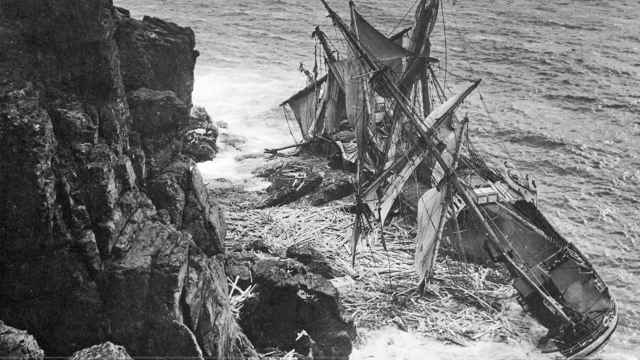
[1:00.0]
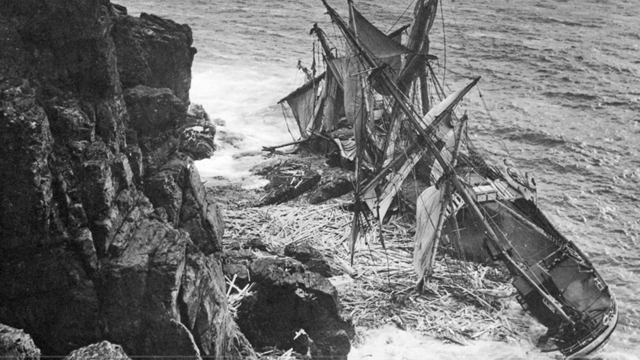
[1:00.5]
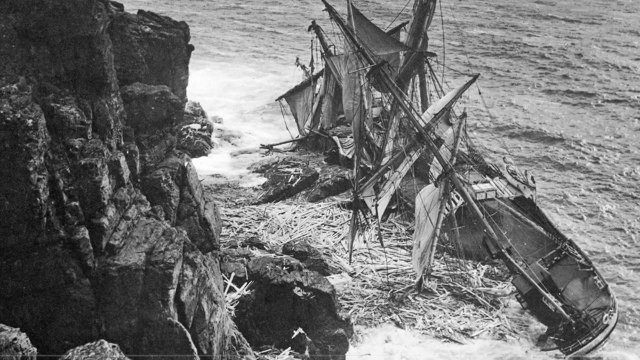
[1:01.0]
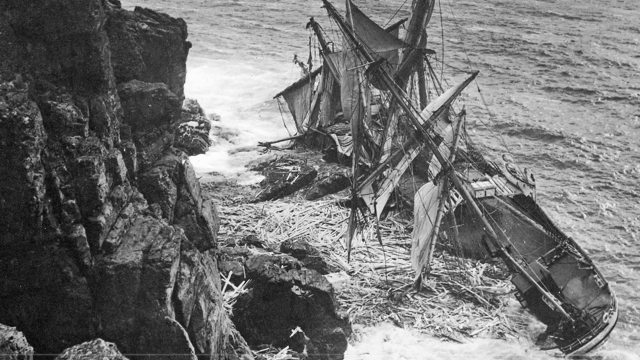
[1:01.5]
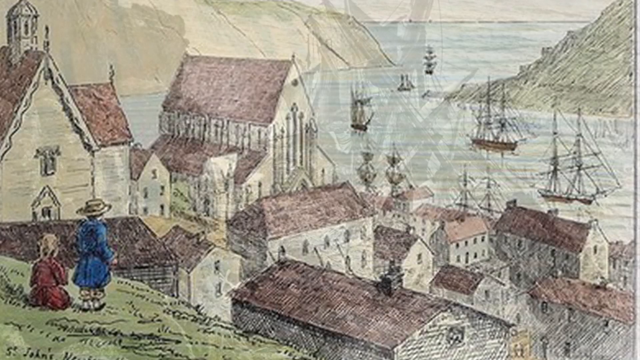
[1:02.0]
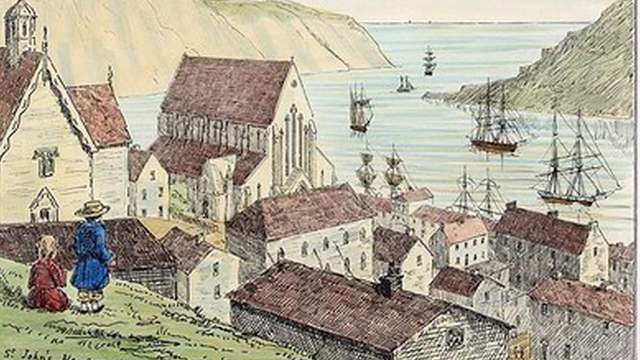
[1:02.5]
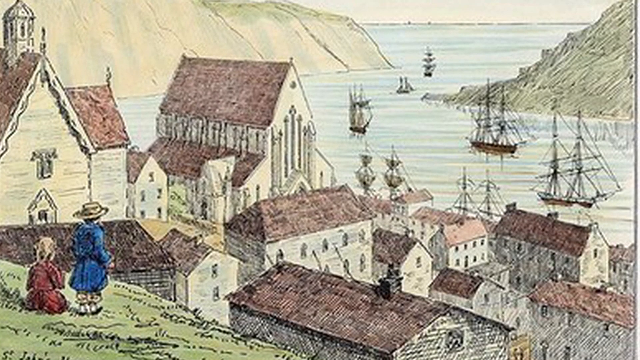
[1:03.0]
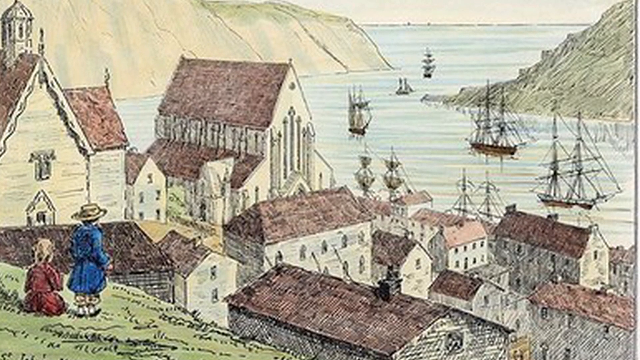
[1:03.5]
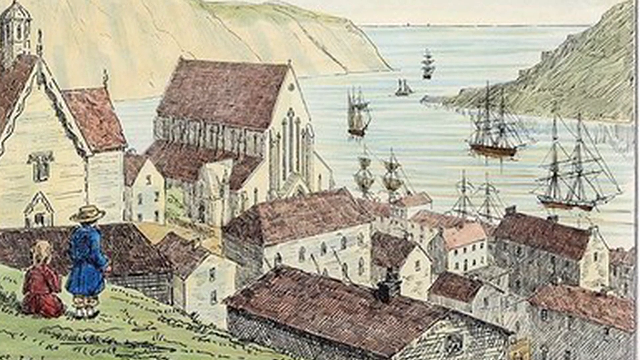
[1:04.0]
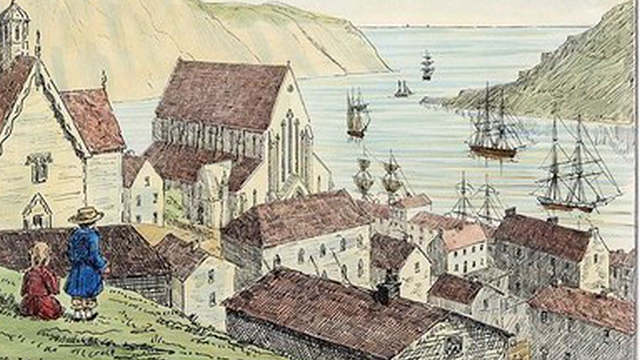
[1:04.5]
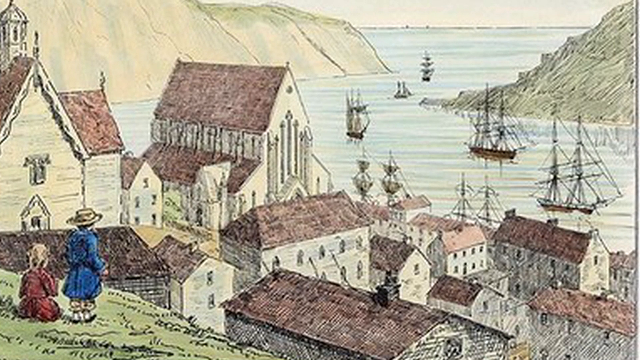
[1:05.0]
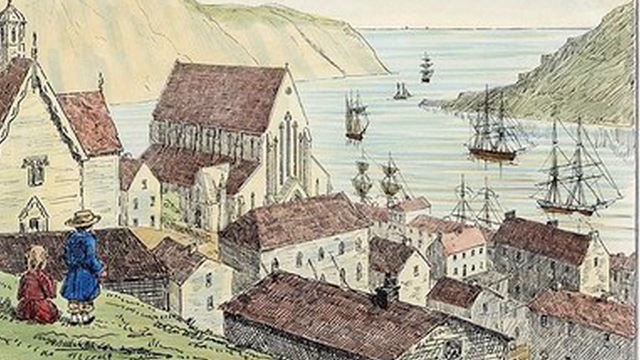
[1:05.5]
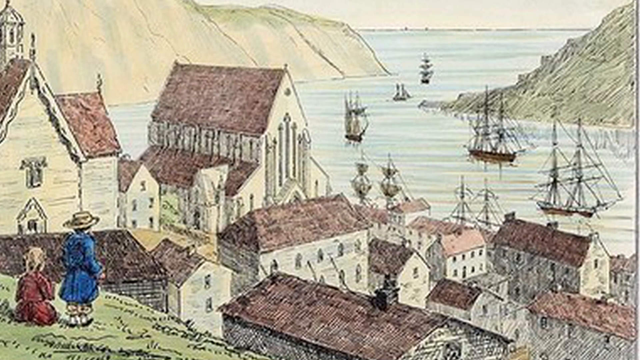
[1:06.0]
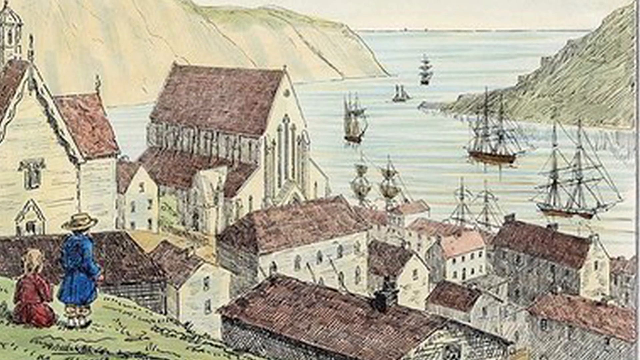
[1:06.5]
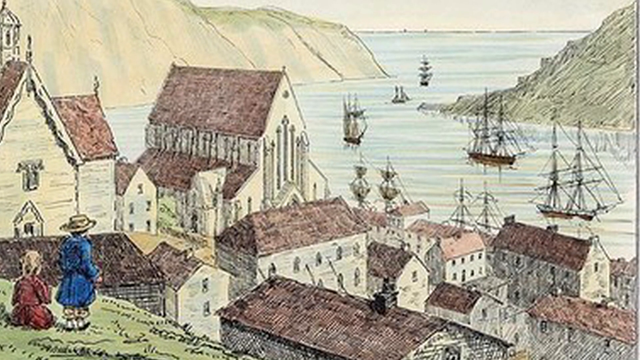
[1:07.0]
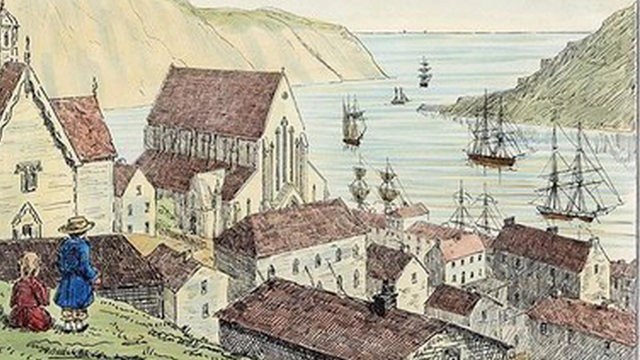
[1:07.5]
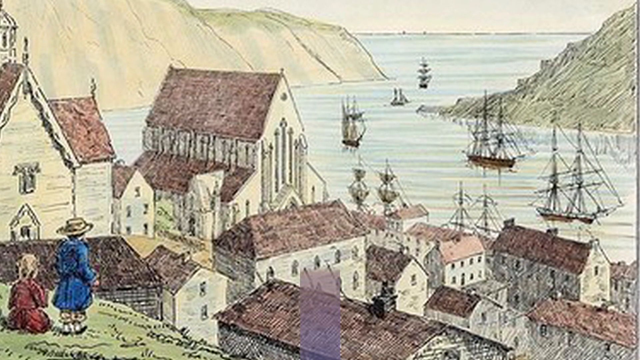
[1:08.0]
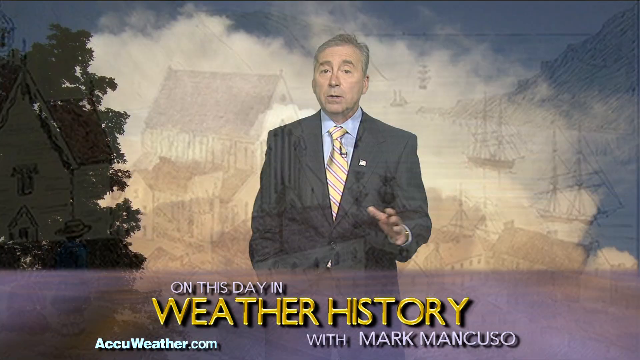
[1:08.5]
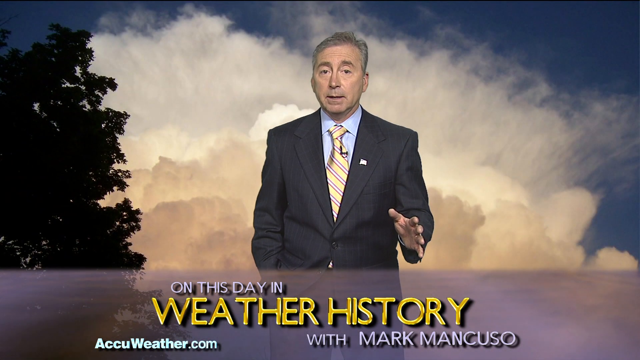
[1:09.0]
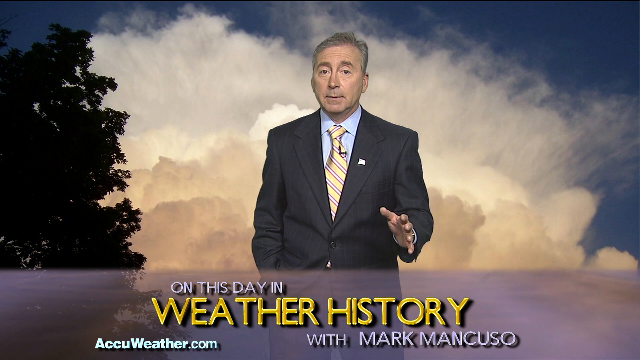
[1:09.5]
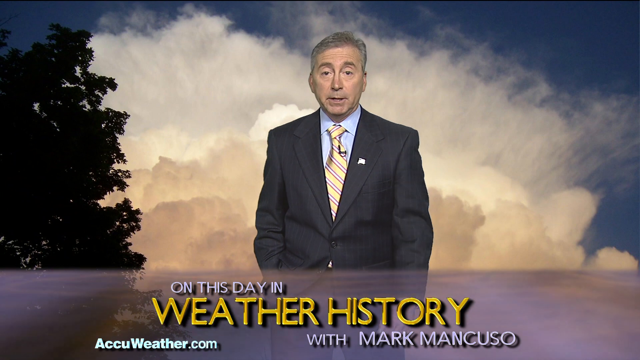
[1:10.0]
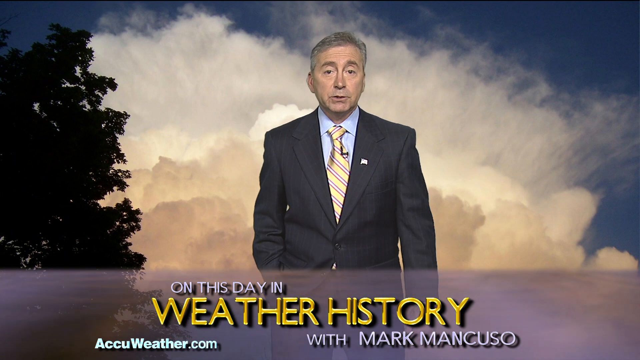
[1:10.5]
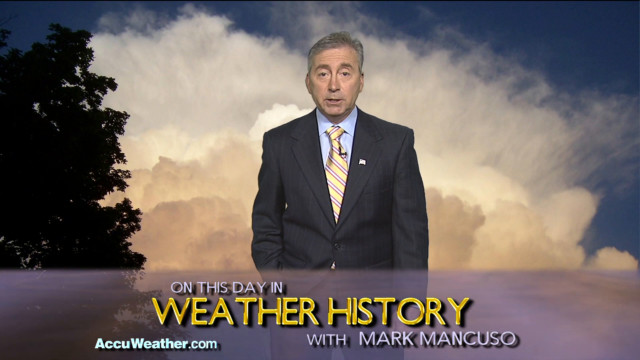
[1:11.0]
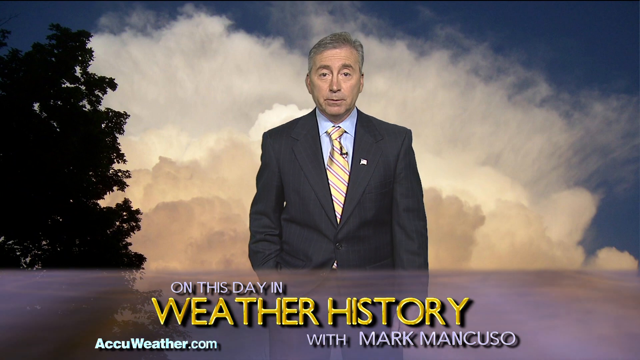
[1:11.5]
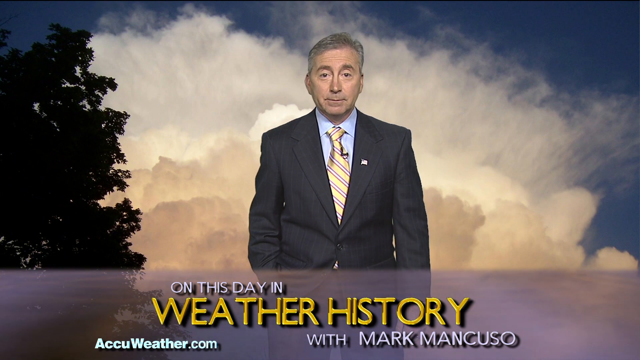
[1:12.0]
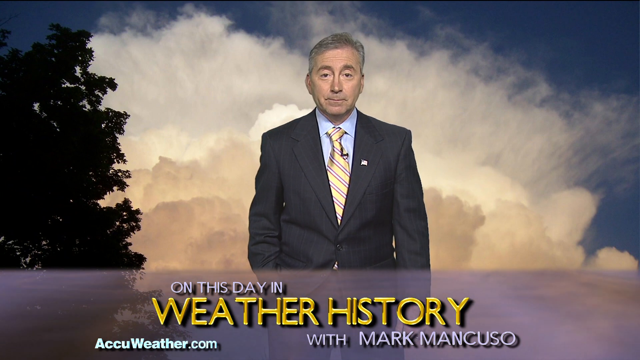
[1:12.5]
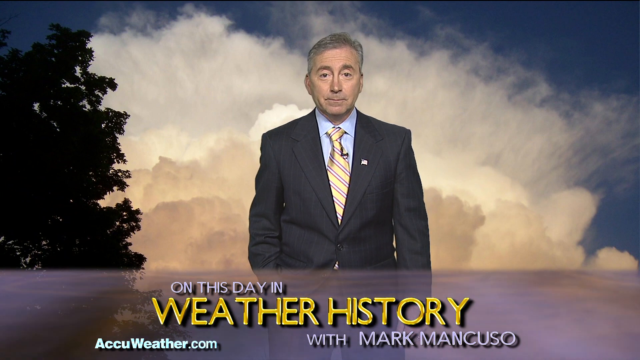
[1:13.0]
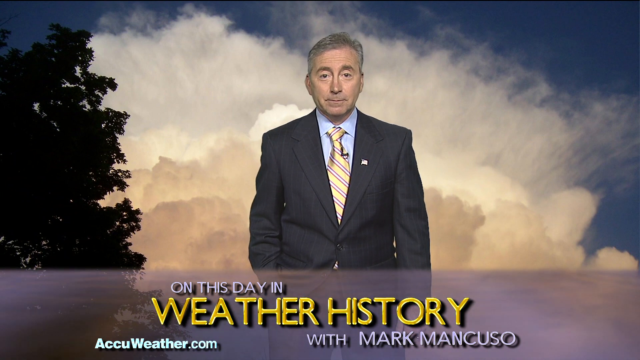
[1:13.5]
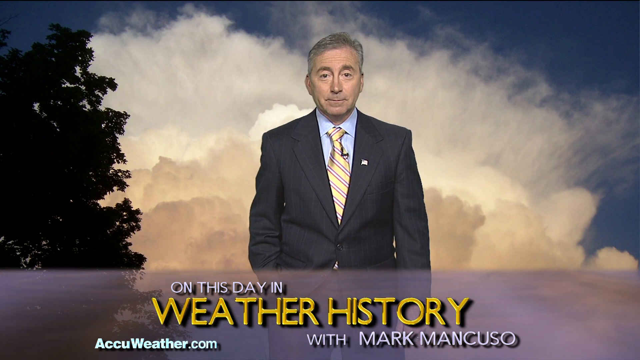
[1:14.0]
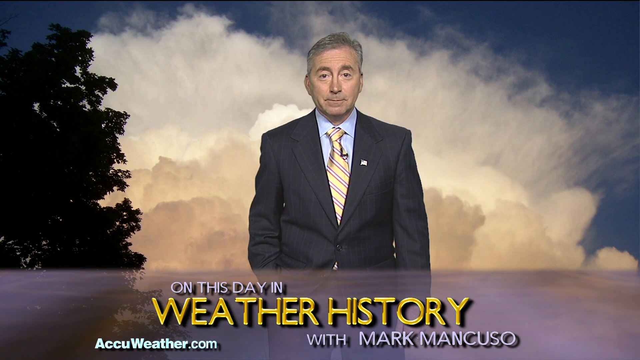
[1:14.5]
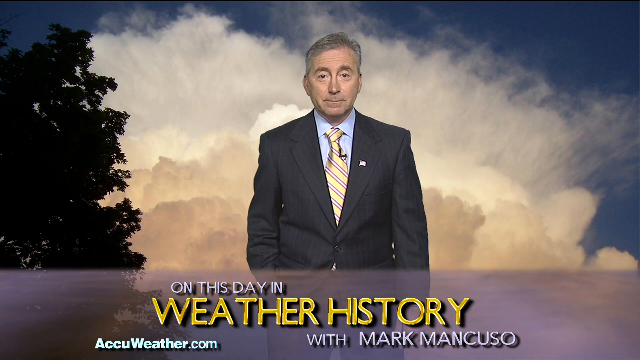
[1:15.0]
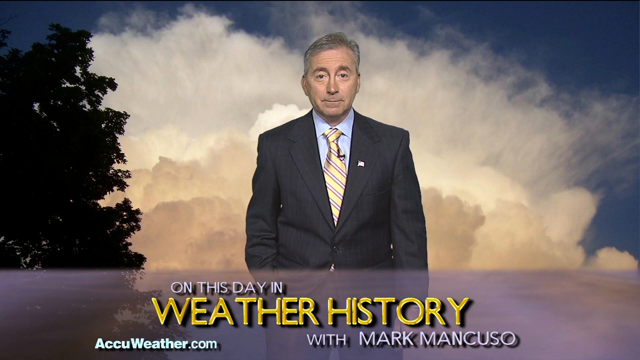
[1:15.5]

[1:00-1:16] A color drawing shows two children at the very front on the left-hand side, one kneeling in a red outfit and one standing in a blue outfit with a straw hat, on a hill overlooking a large town. The town has many white buildings with red roofs, the most prominent being what appears to be a church, about the farthest away from the children. Behind the church and the rest of the city is water with about five to six large boats with great sails and masts, which seem to be using this channel to pass through, surrounded by more mountainous terrain. The camera pans and then flashes to the man from the beginning of the video, standing in his black gray suit with a blue button-down shirt and a yellow striped tie. His right hand is in his pocket and his left hand is out, and he stands in front of a blue sky background with a very large cloud and a darker tree on his left-hand side. In front of him a sign reads "on this day in" in small letters and "weather history" in big yellow letters, all on a purple banner.